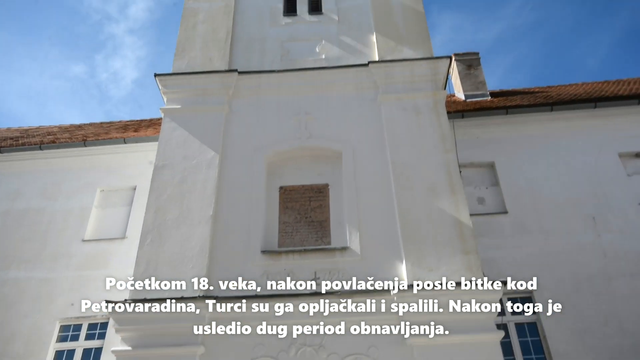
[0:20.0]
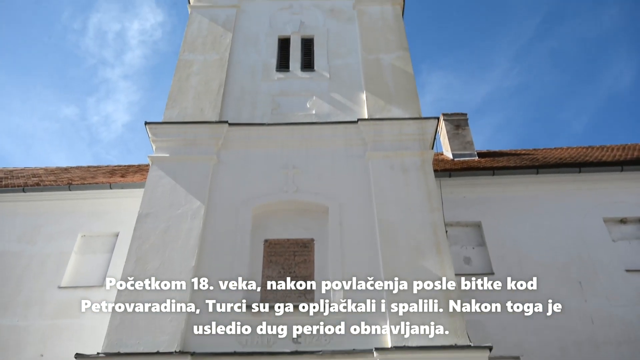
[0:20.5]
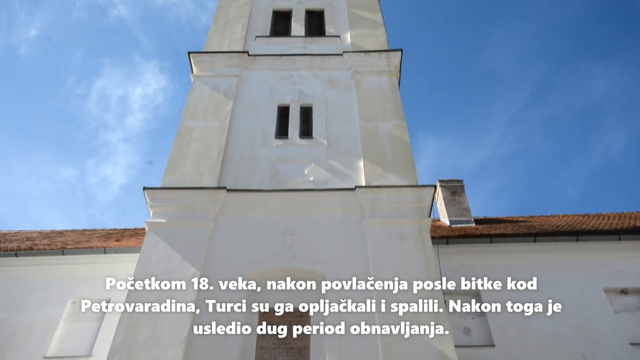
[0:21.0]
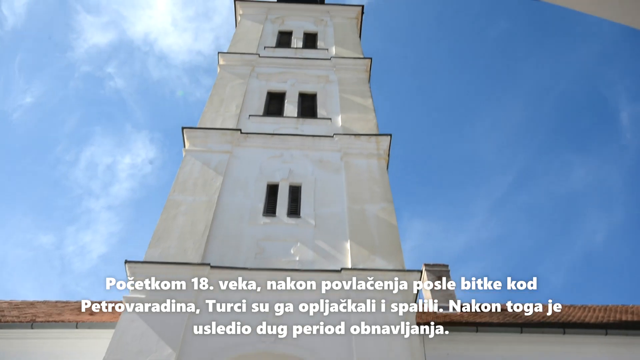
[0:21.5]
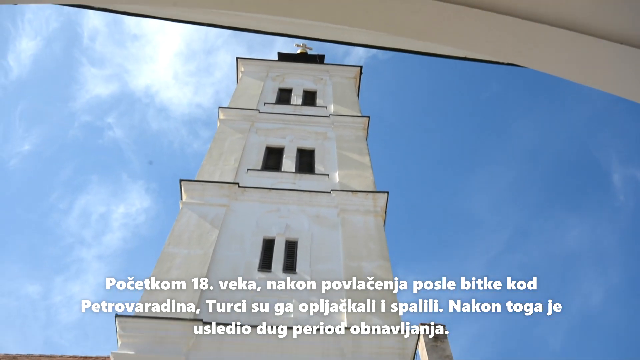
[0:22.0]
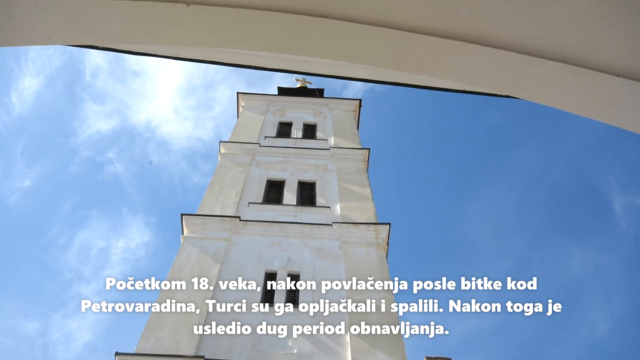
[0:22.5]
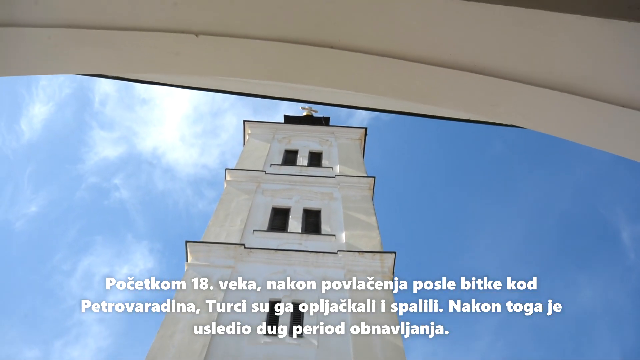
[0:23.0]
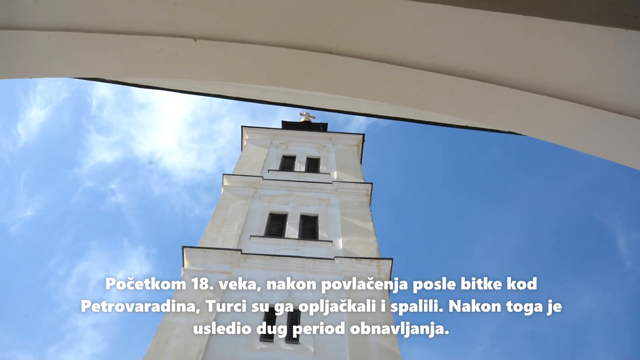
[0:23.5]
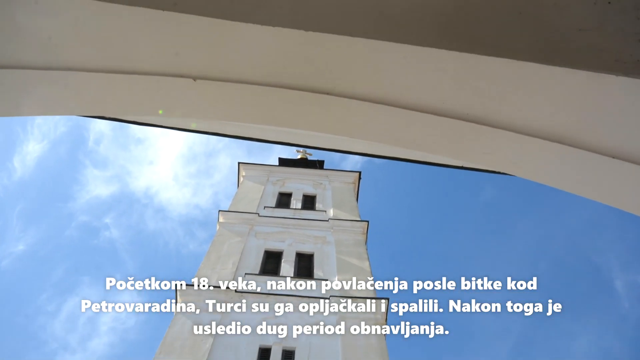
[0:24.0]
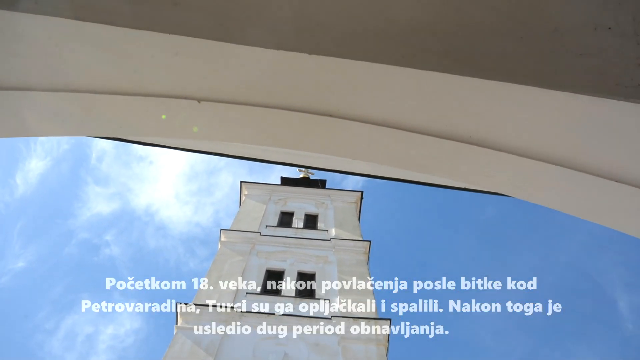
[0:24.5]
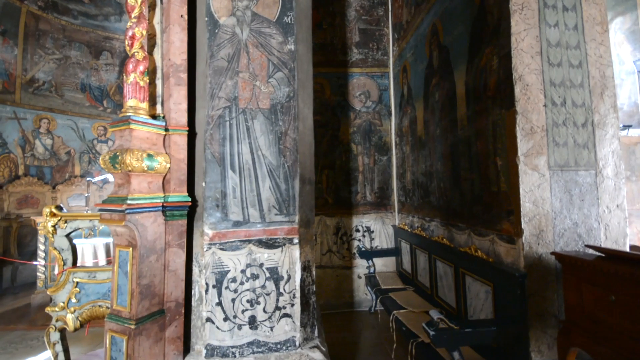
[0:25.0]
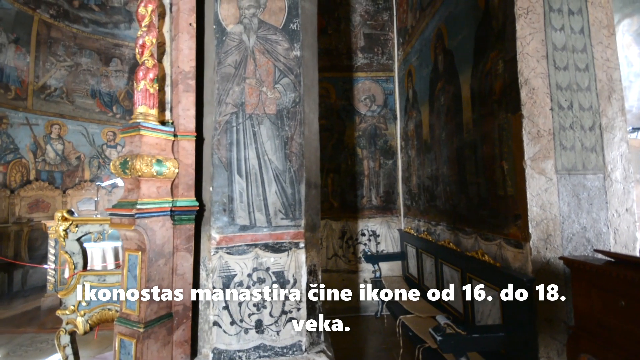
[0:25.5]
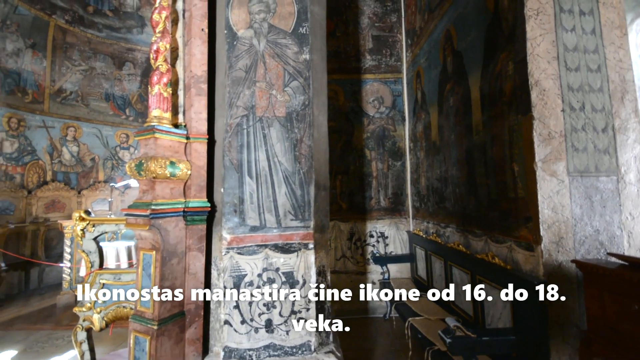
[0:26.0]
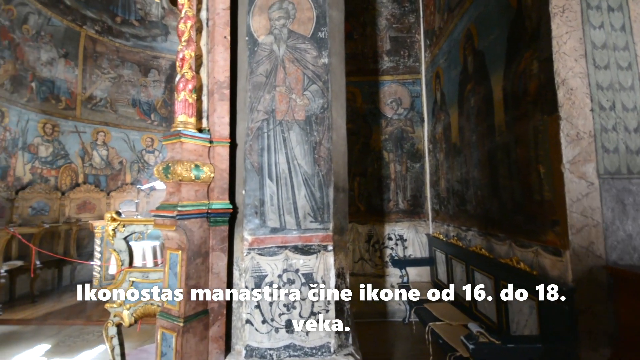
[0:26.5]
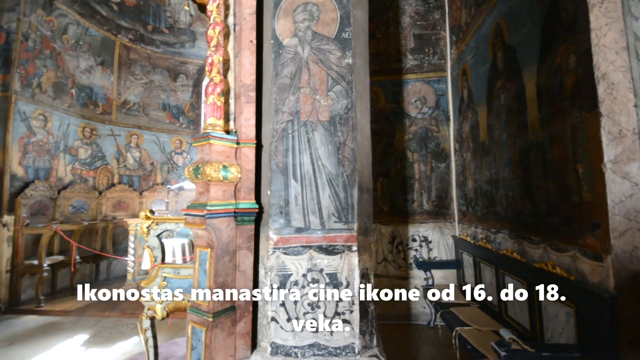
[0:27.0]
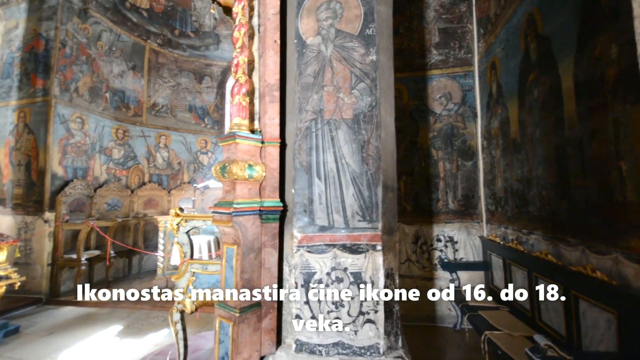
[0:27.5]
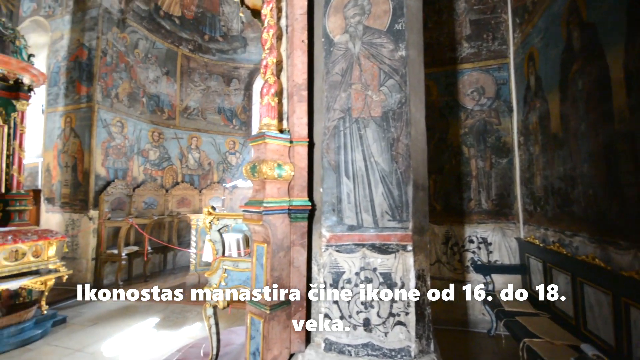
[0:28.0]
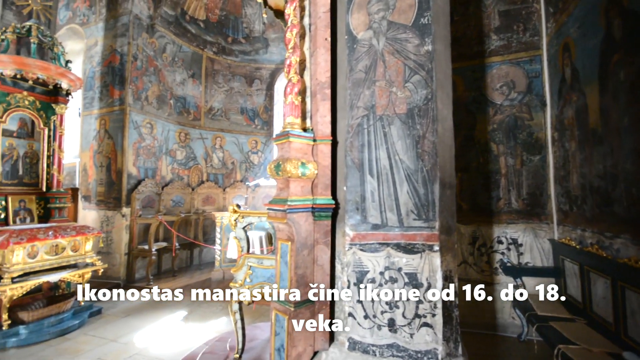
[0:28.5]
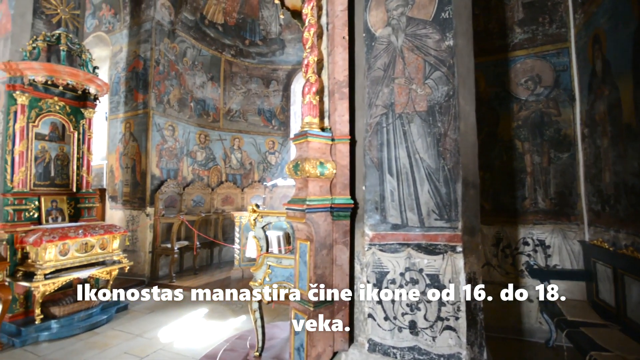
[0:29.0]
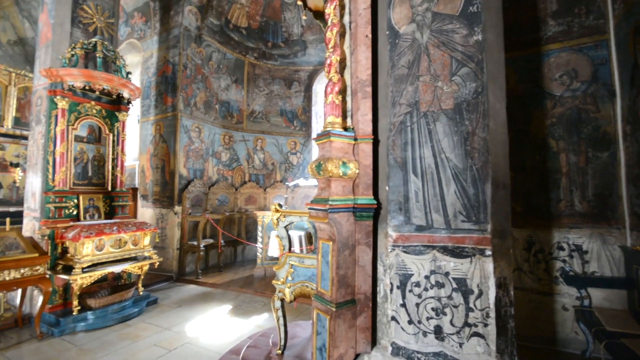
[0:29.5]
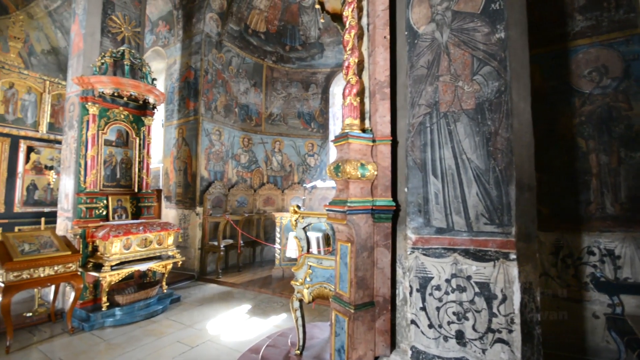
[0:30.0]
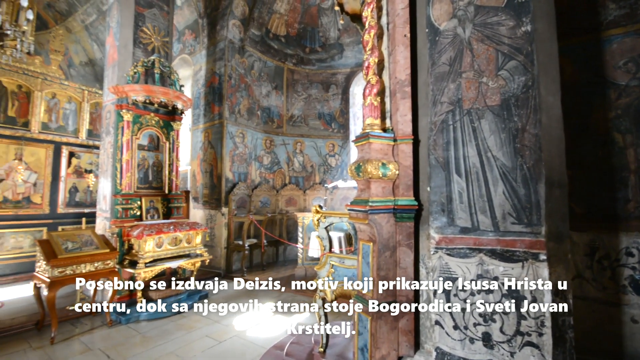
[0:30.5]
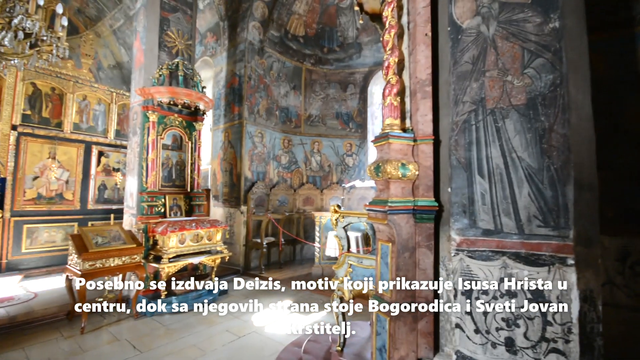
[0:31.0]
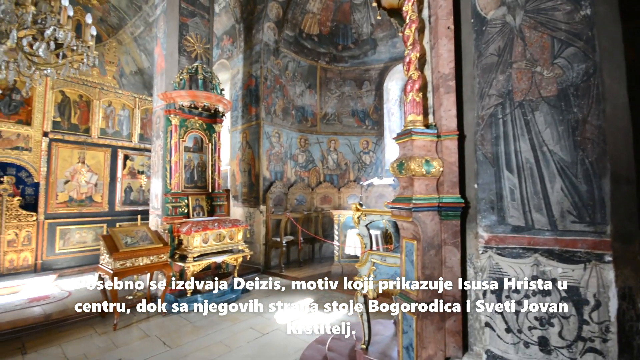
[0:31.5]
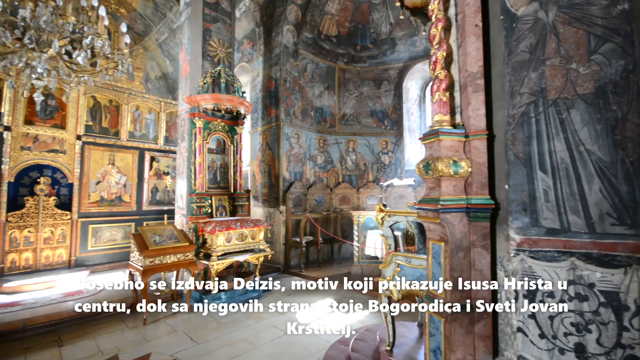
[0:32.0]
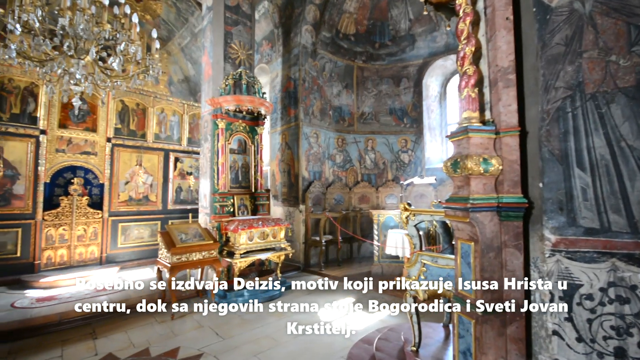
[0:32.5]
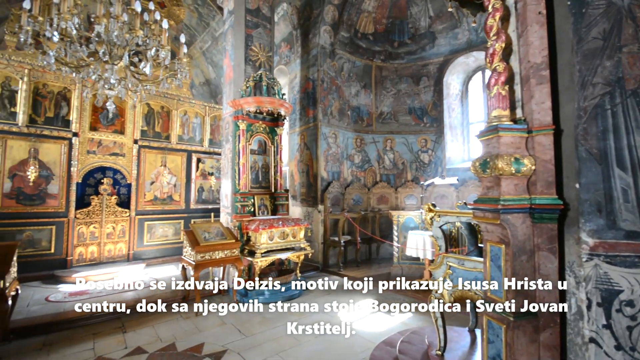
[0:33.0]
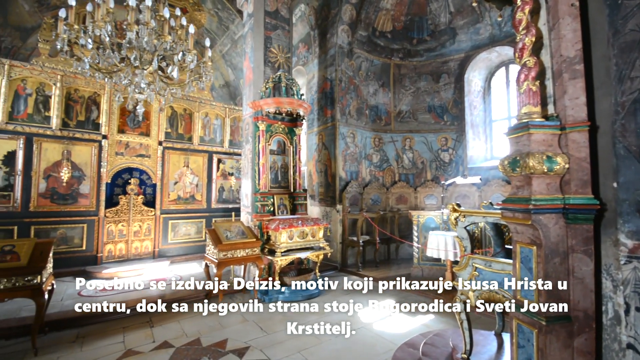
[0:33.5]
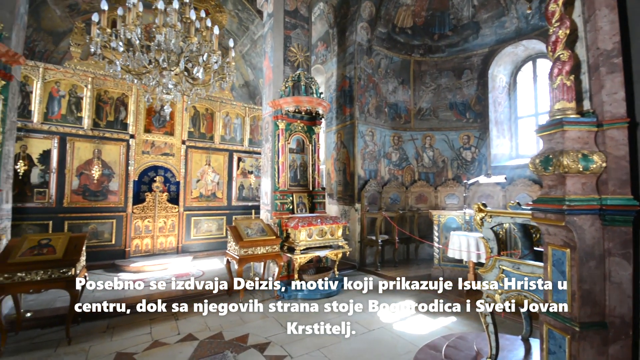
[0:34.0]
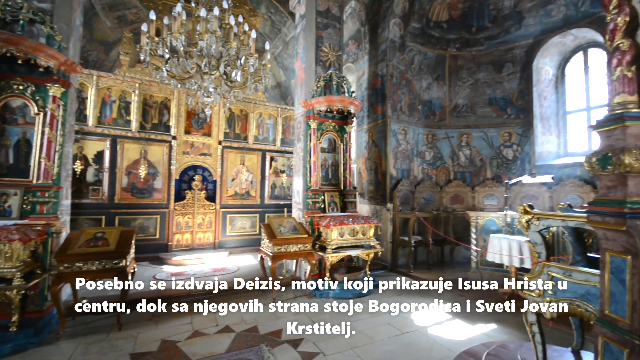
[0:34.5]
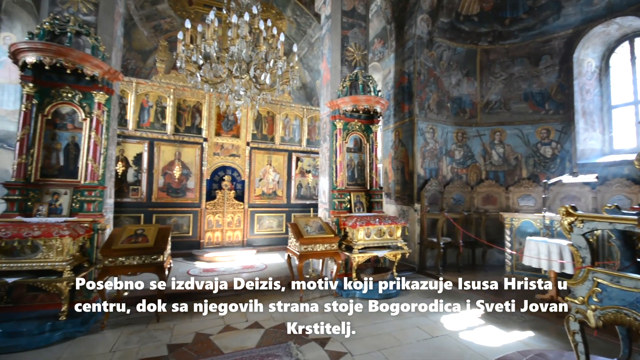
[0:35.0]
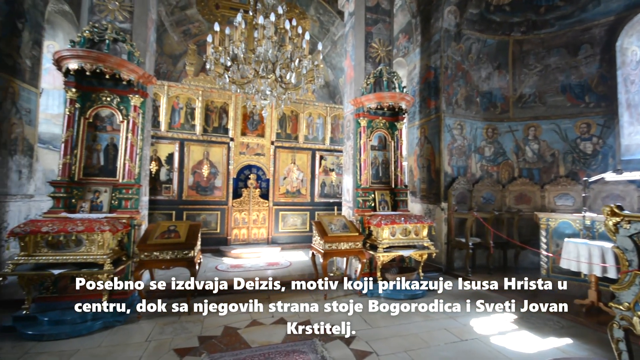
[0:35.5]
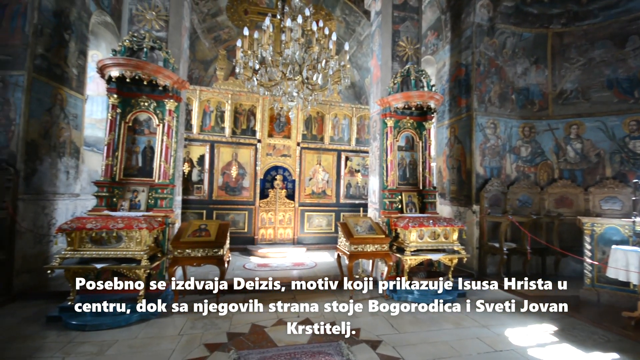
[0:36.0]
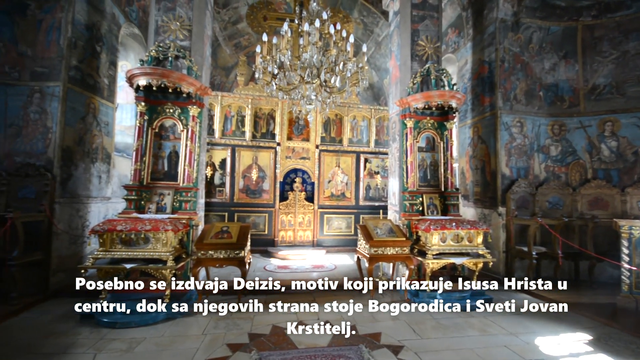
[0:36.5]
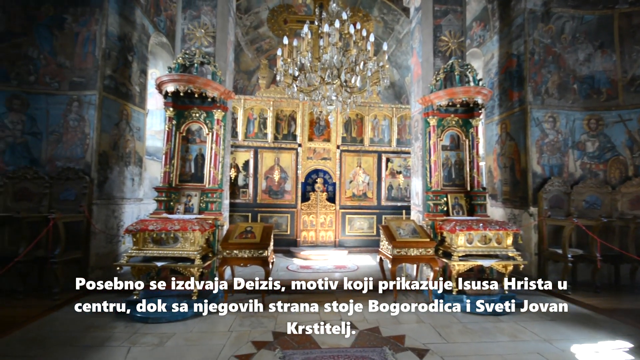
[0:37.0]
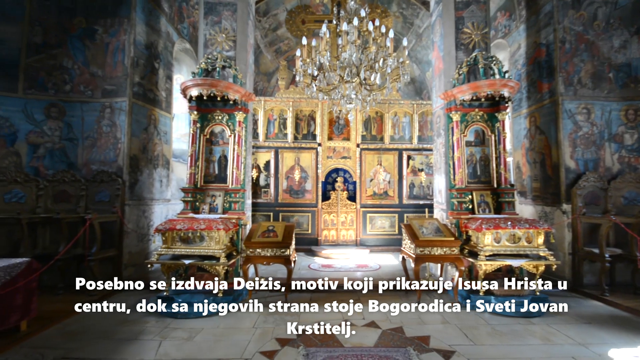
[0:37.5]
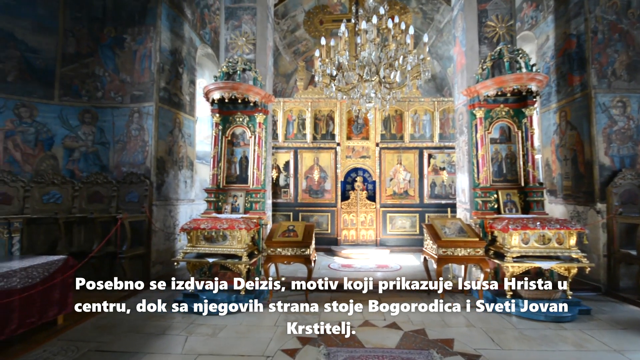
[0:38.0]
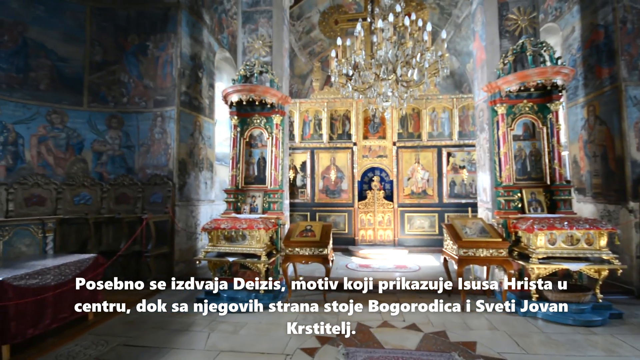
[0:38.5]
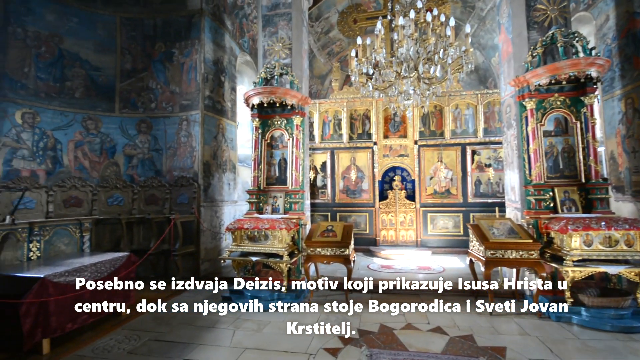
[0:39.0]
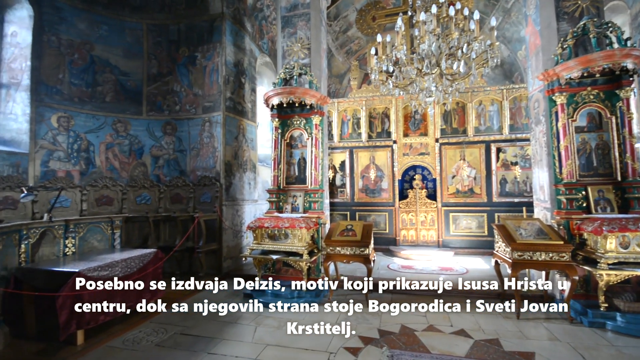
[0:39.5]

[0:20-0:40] The scene begins with a view of the top of a white building with boarded-up windows against a bright blue sky, with words in a language other than English at the bottom. It then moves inside a building to show paintings of various colors on a wall or walls; the paintings are kind of dull. Chairs and different objects are around the walls with the paintings, and the on-screen words remain in another language. The view rotates to the left to show the full room with its various paintings on the wall. The paintings are colorful but not vivid and appear to be historical paintings depicting various times in history. They fully cover the walls of the room but are separated from each other. There is a chandelier in one corner of the room and a black bench on the right, along with other desks and chests.